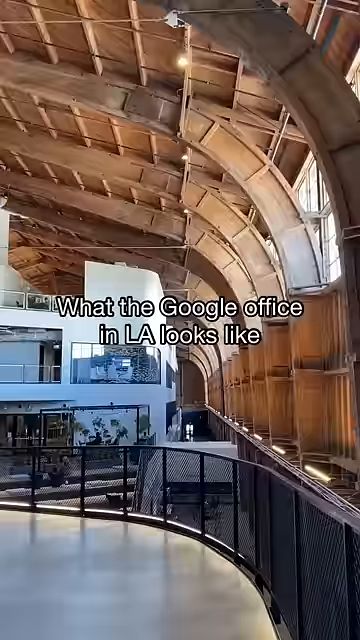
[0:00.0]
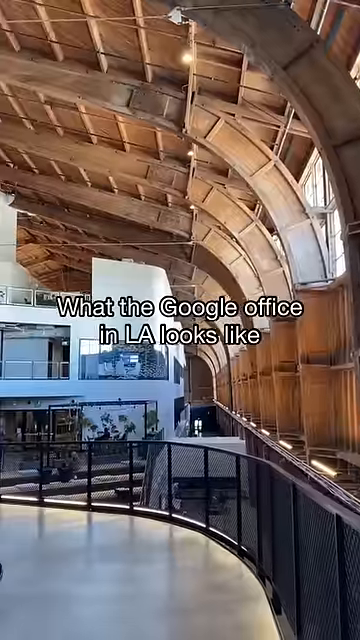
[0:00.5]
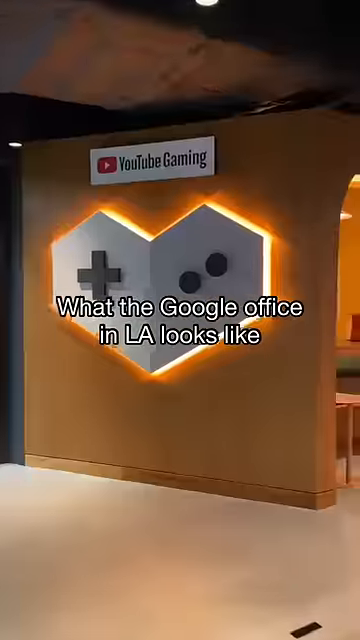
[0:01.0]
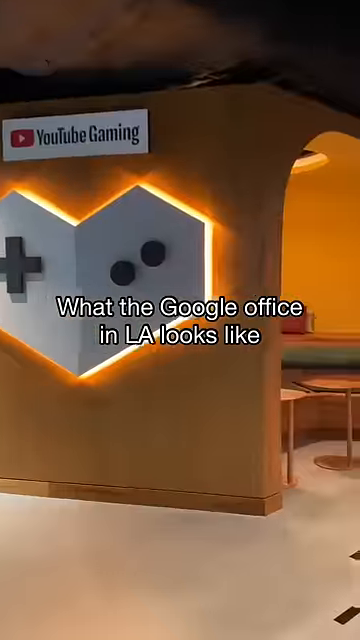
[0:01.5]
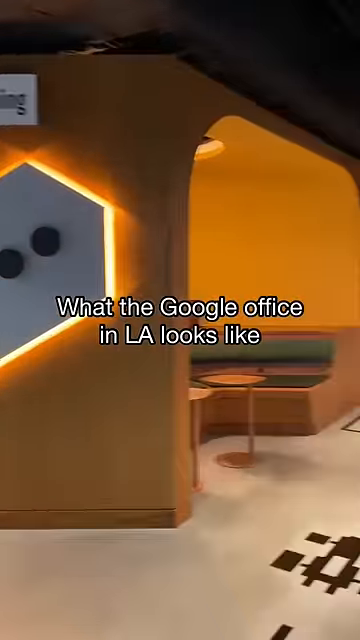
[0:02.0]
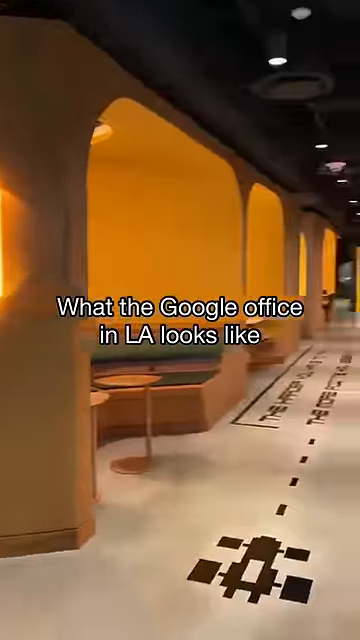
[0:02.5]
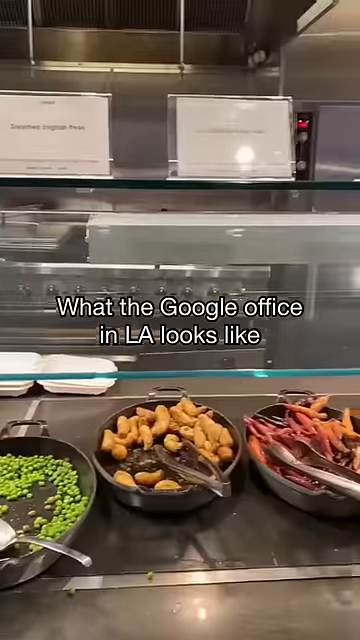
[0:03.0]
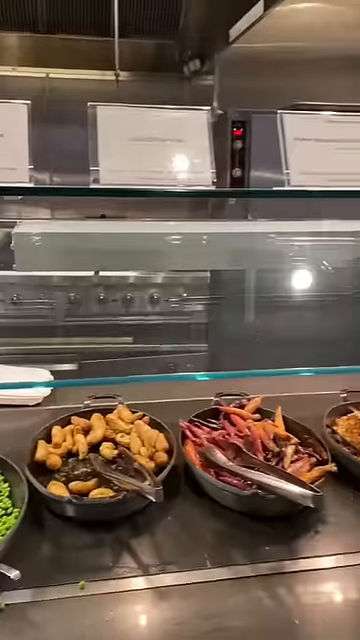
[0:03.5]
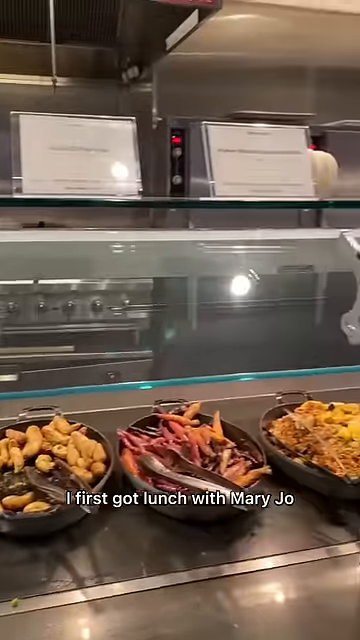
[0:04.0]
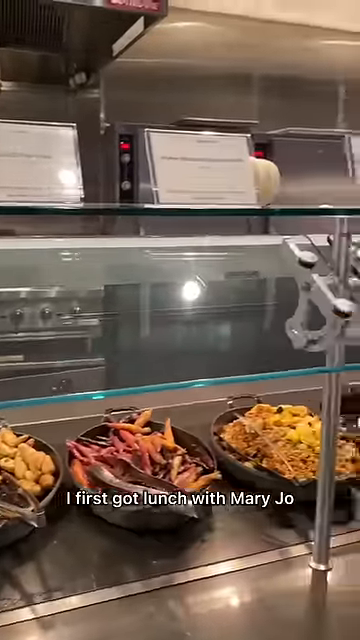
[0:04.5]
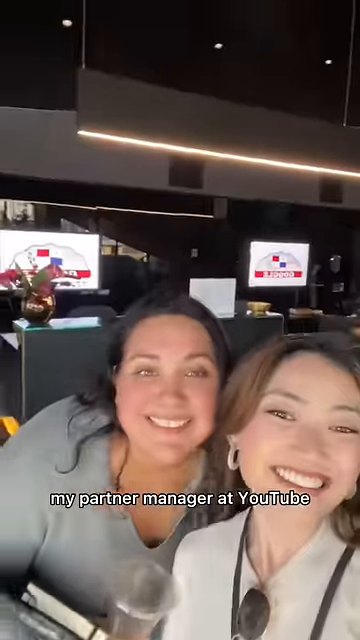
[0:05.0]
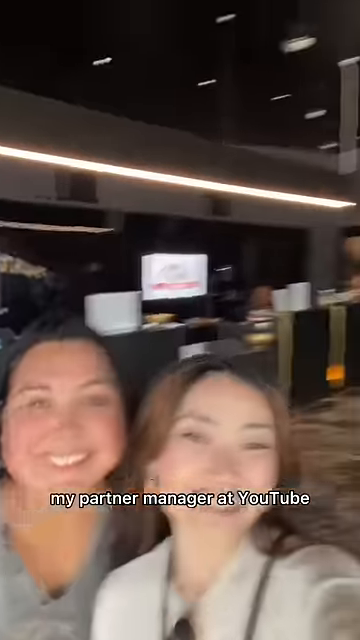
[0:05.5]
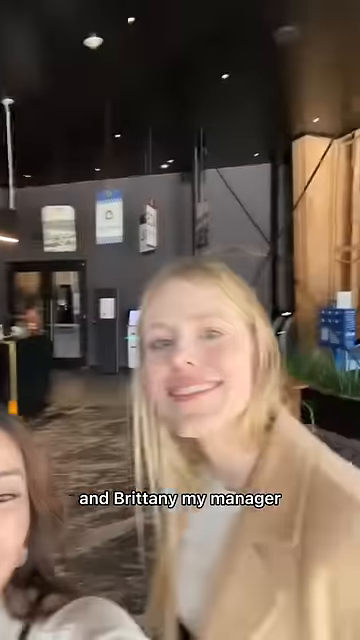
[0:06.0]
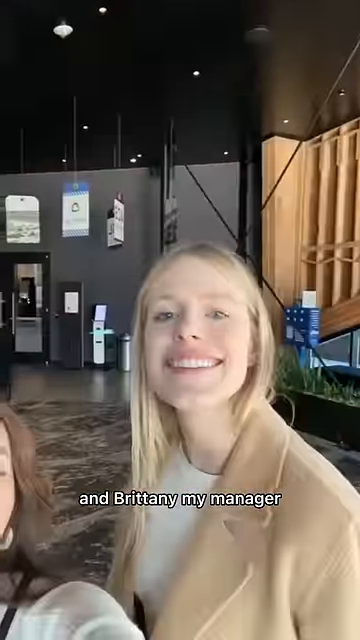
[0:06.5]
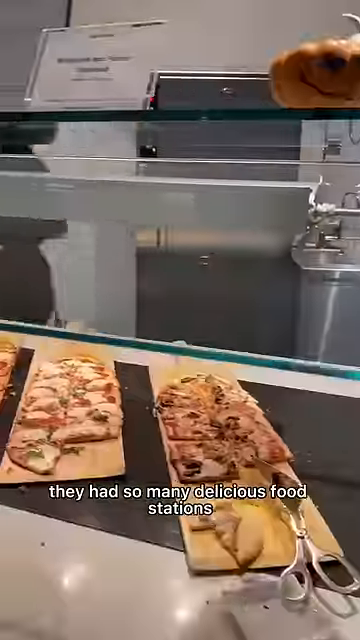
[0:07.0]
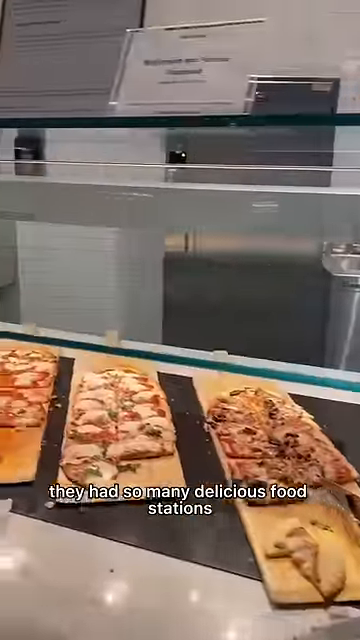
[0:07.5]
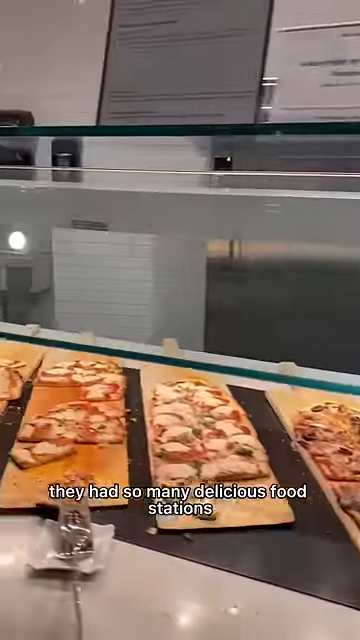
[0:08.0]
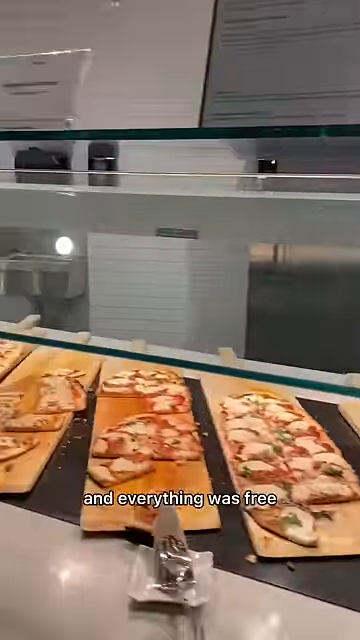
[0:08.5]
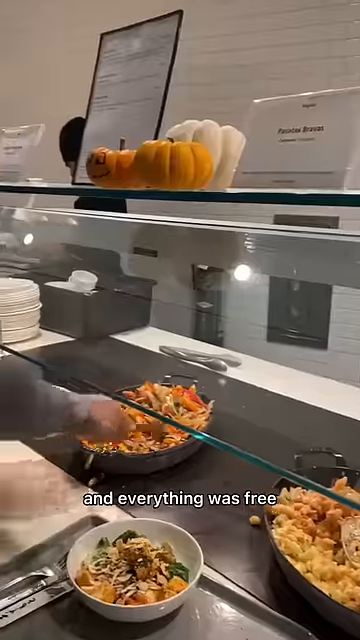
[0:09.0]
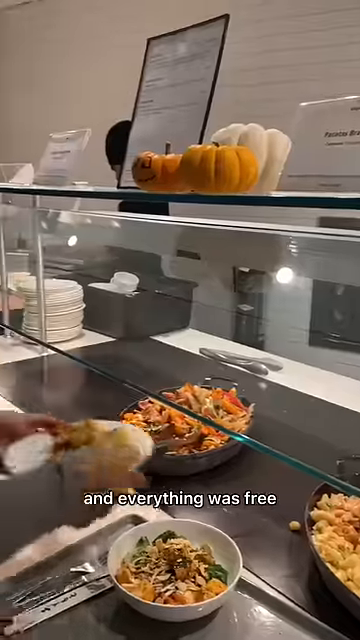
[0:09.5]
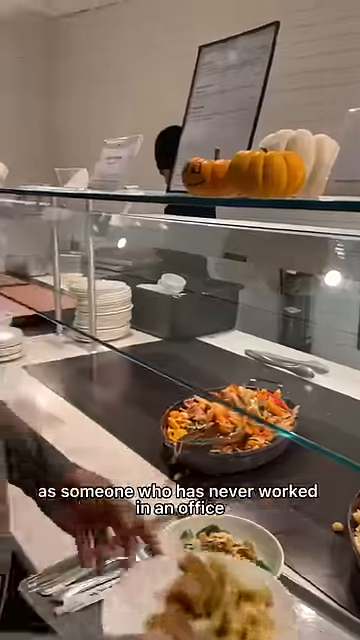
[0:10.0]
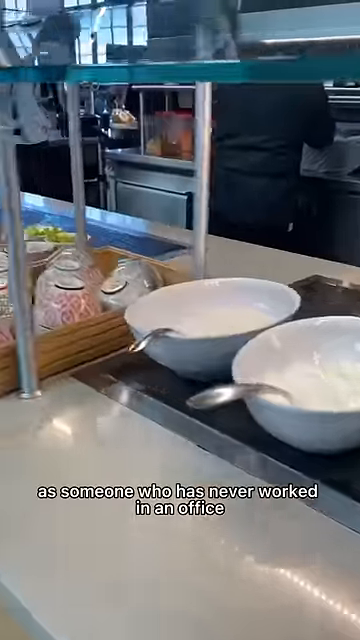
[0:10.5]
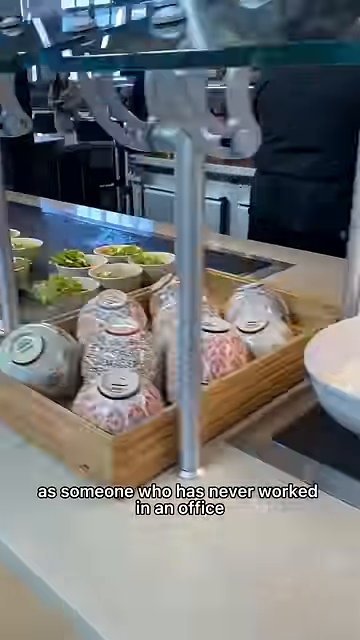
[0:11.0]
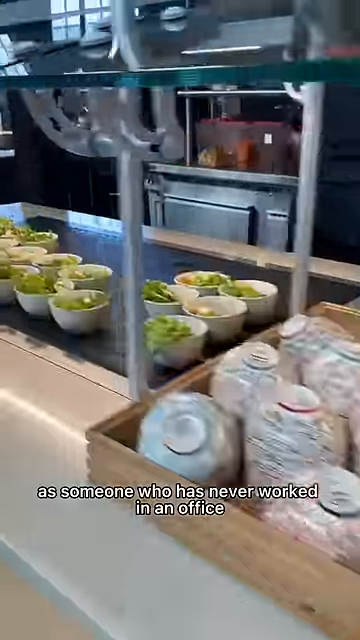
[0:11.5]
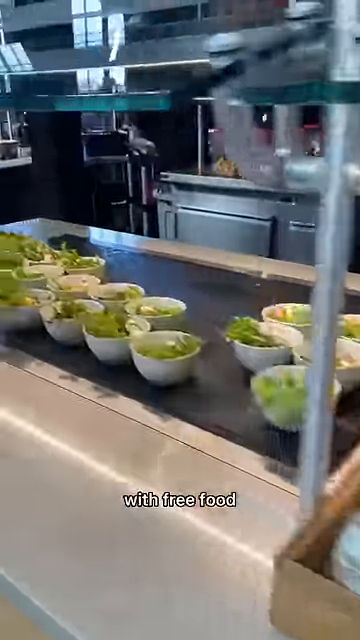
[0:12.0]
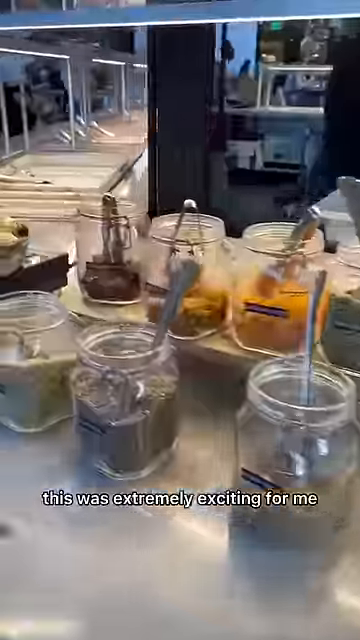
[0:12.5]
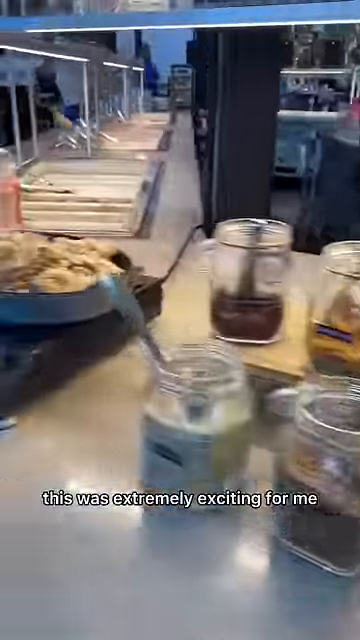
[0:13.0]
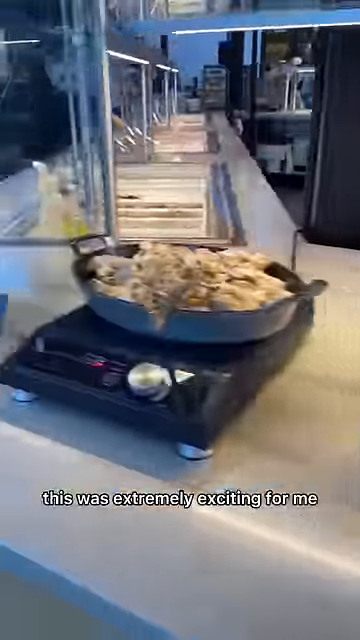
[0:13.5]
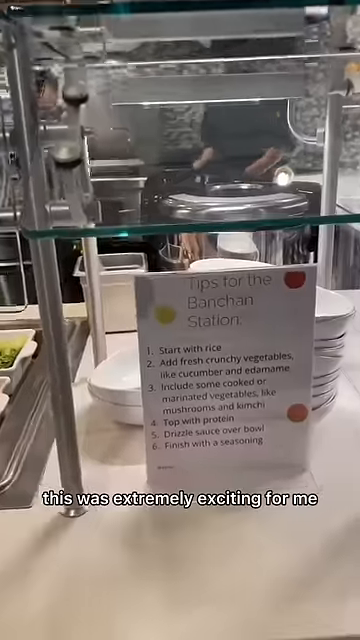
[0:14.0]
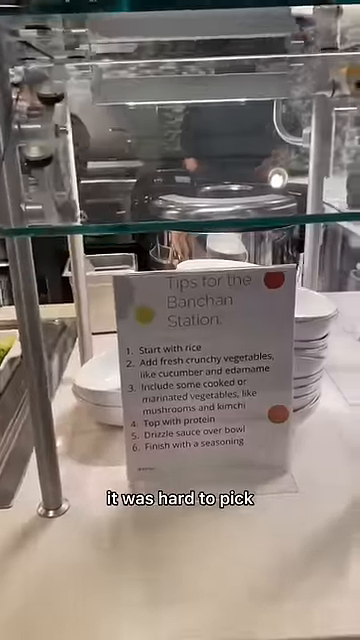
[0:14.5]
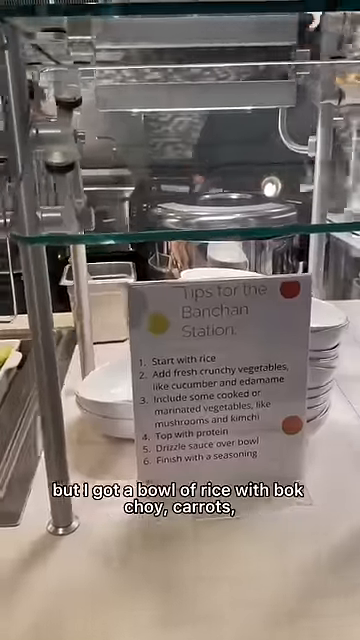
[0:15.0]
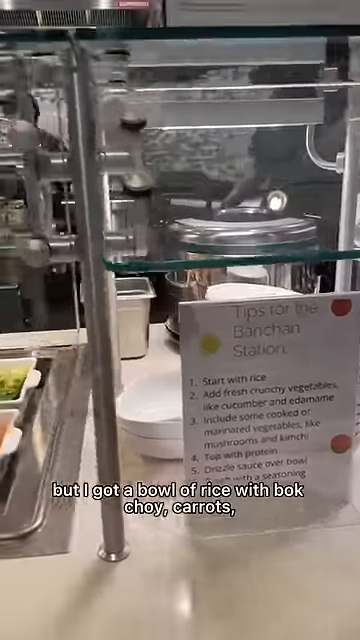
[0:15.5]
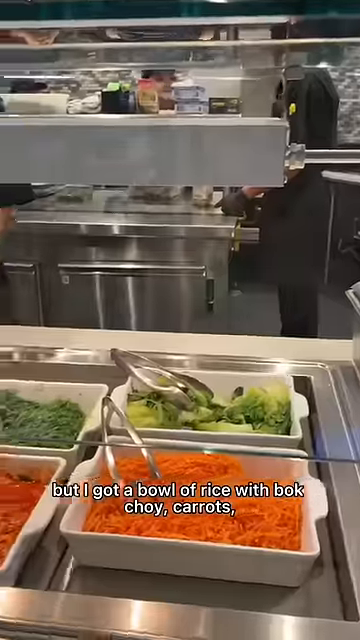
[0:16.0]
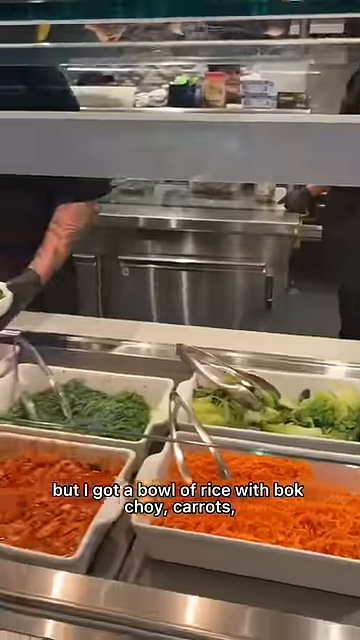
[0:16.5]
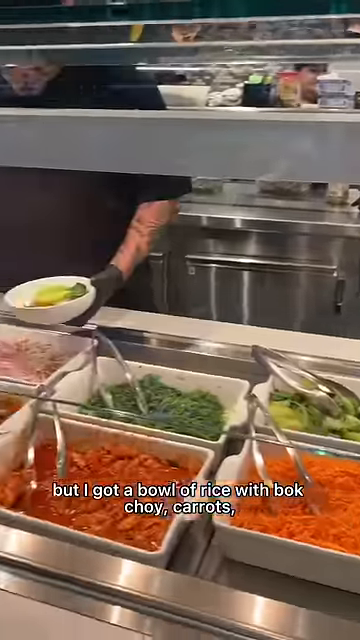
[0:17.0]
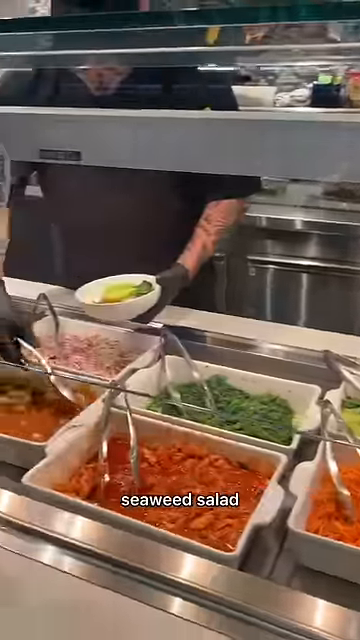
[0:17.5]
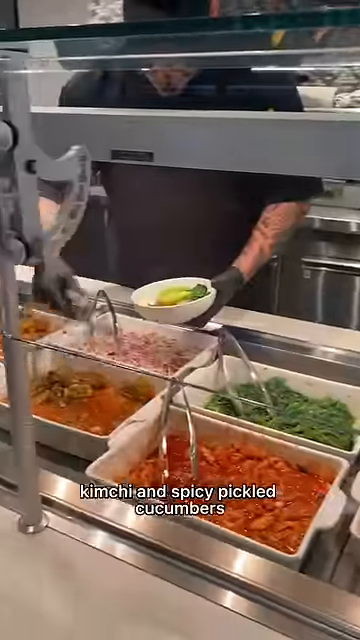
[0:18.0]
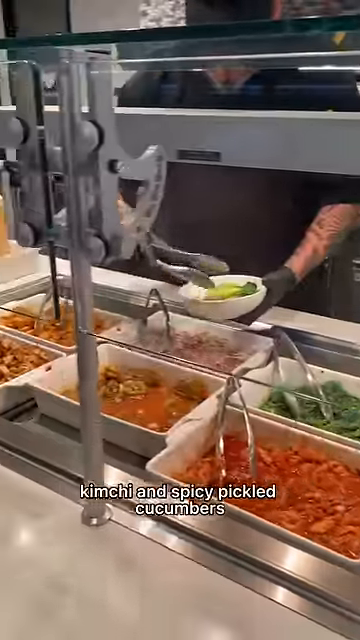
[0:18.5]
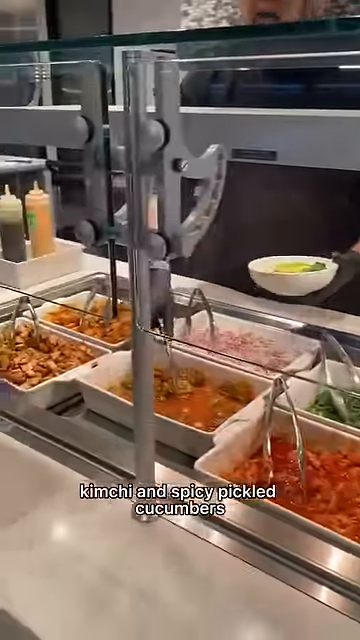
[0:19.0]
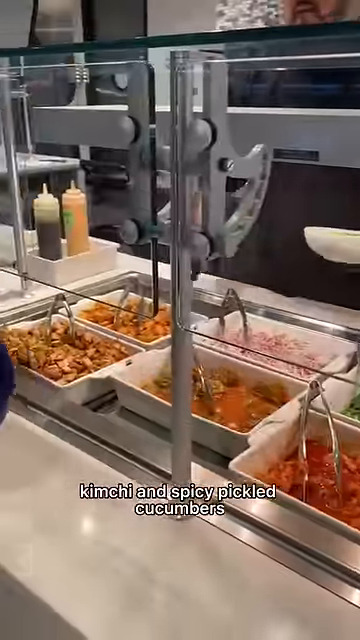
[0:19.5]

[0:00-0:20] The video opens with the words "what the Google office in LA looks like" over the recording. Various shots show the inside of the Google office, different people, and the food that is served, mostly focusing on places to eat. The opening also shows the inside of the office and how large it is. Bowls of food are lined up ready to be served, with kitchen equipment visible in the background. The words "I first got lunch with Mary Jo" appear on the screen, along with "My partner manager at YouTube" and "Brittany my manager." A picture shows three women talking and smiling at the camera. A server wearing black gloves serves the food from behind the line.